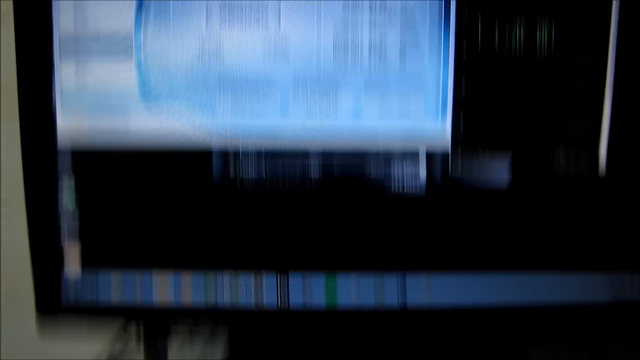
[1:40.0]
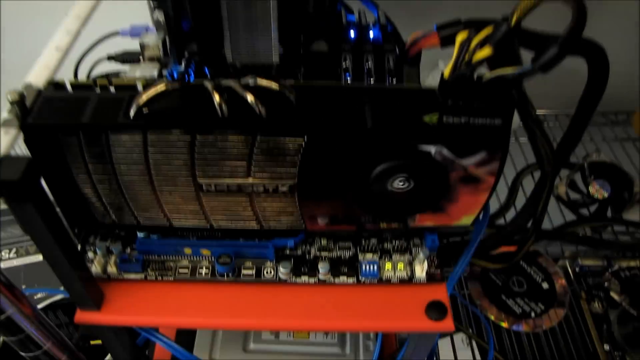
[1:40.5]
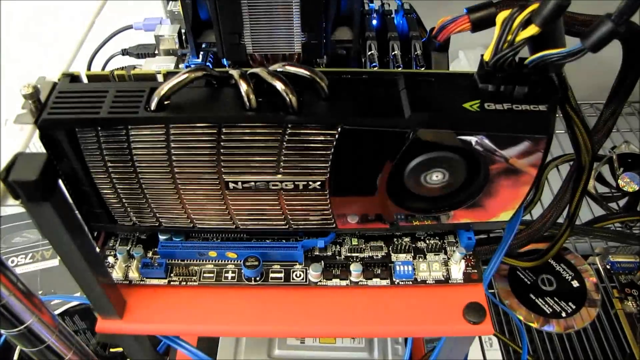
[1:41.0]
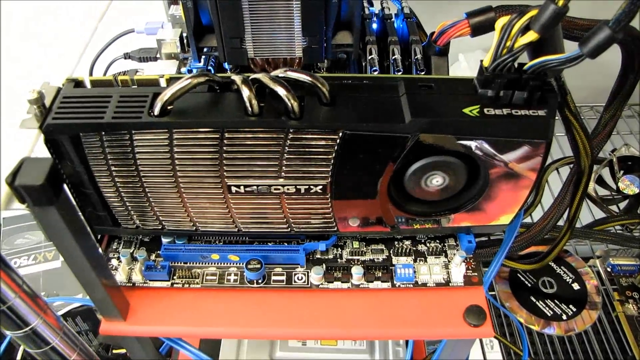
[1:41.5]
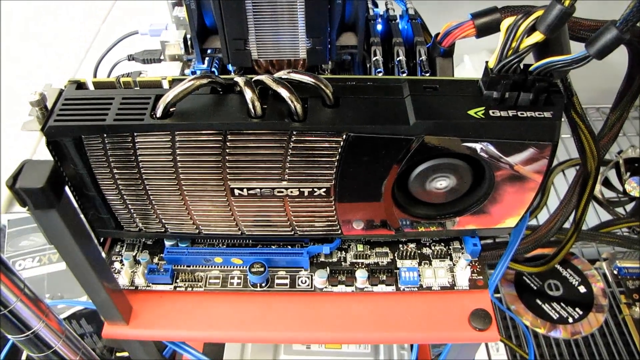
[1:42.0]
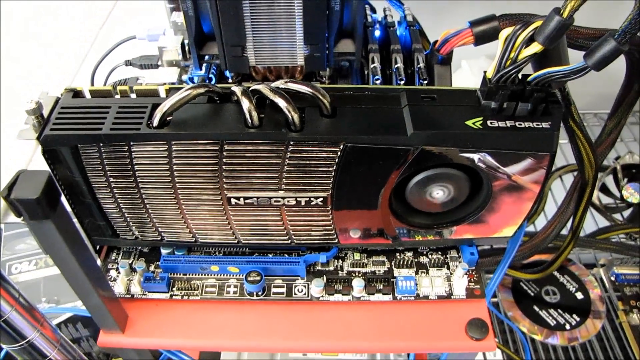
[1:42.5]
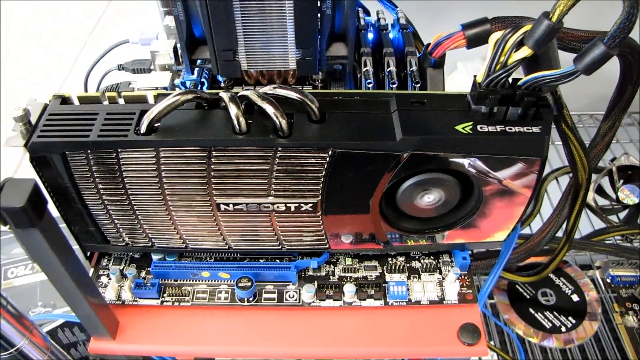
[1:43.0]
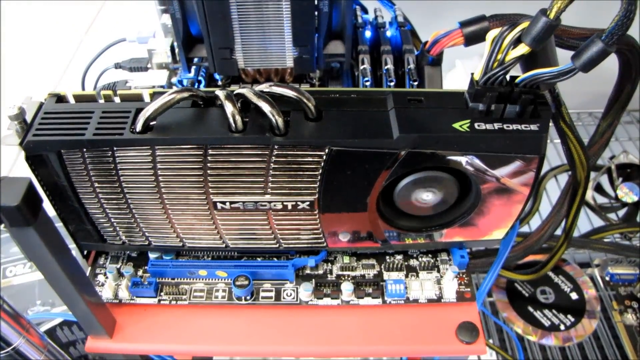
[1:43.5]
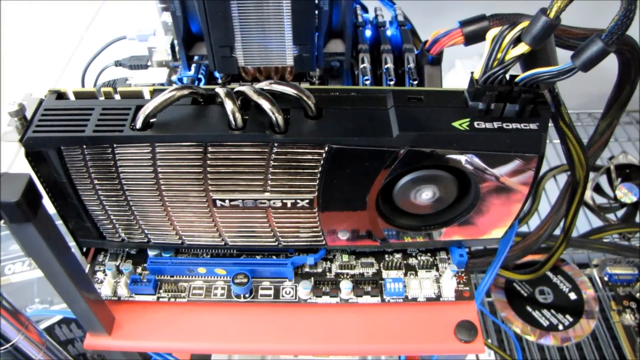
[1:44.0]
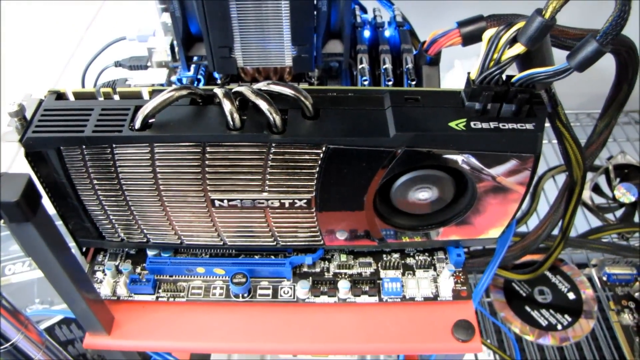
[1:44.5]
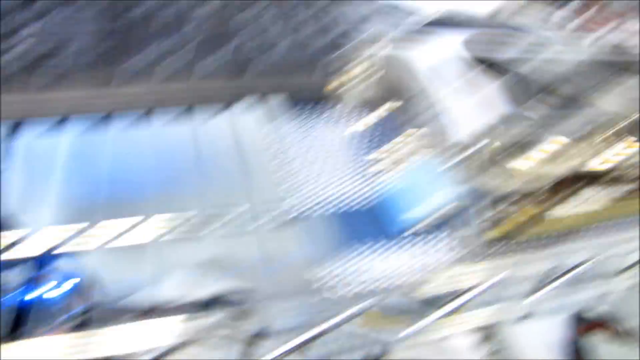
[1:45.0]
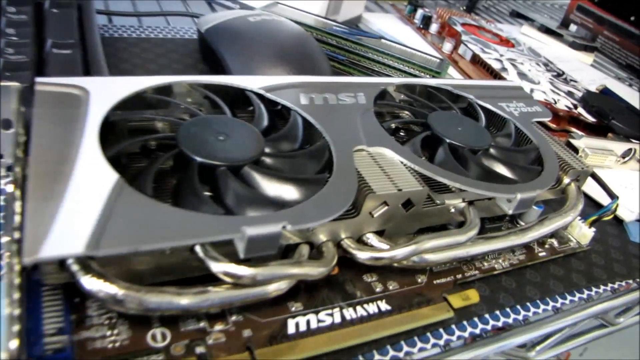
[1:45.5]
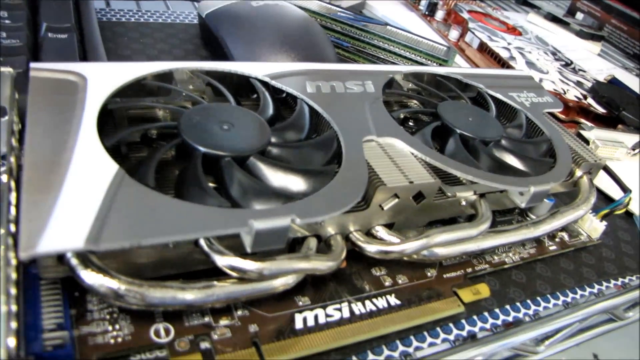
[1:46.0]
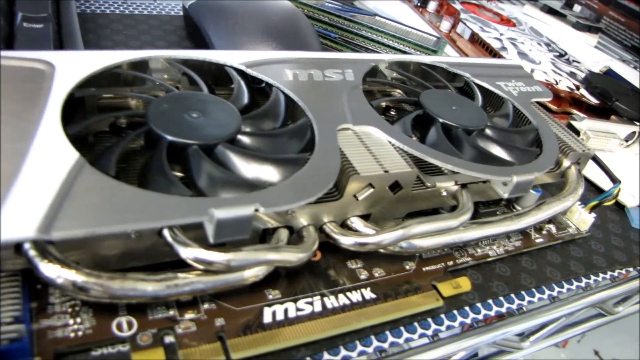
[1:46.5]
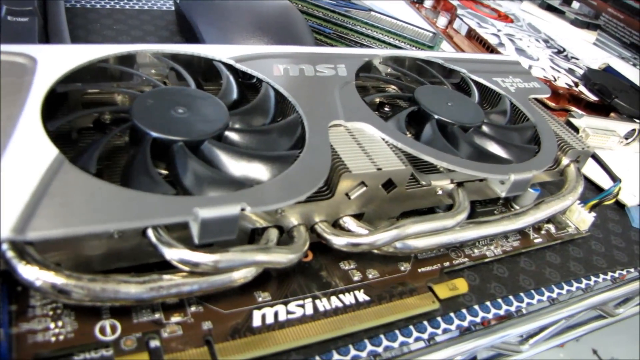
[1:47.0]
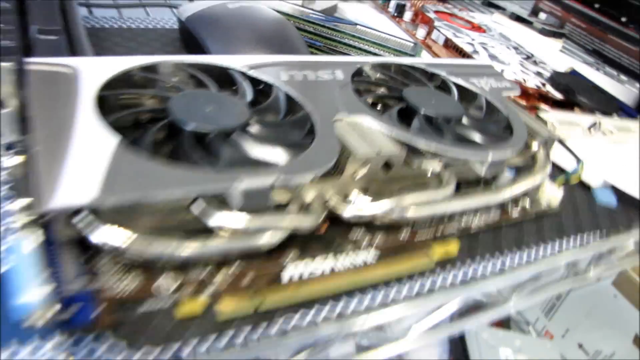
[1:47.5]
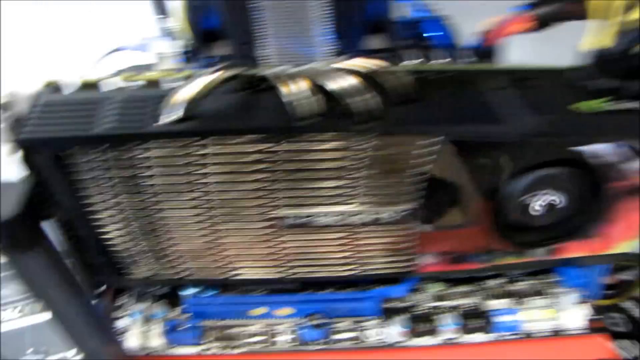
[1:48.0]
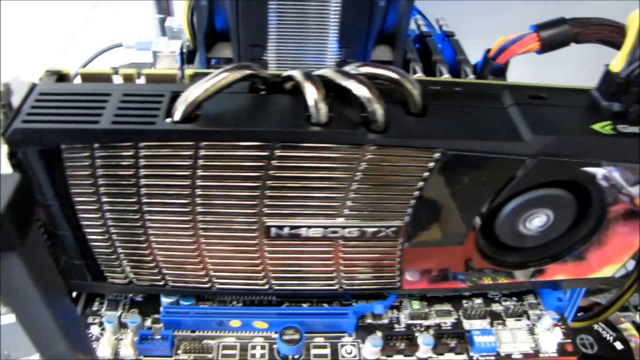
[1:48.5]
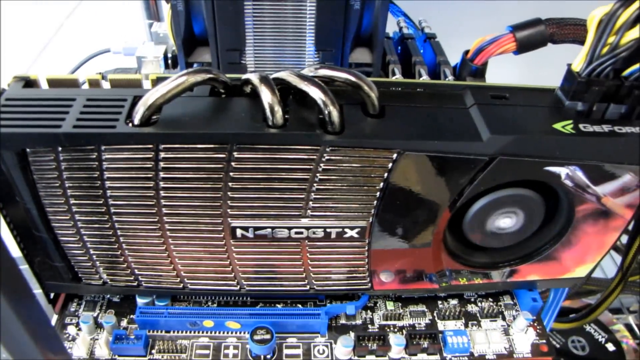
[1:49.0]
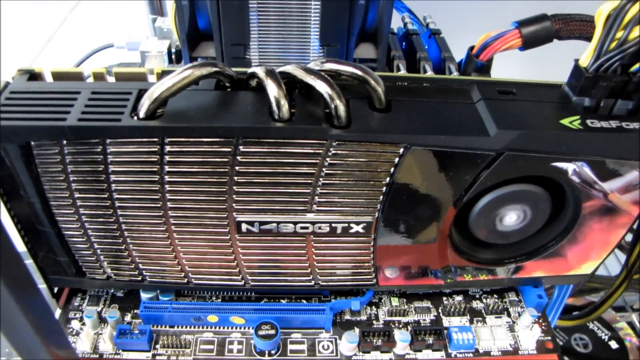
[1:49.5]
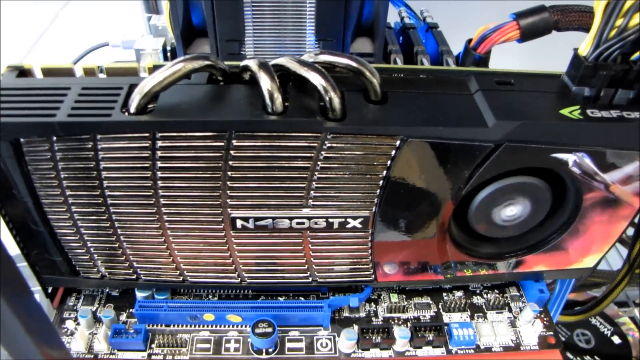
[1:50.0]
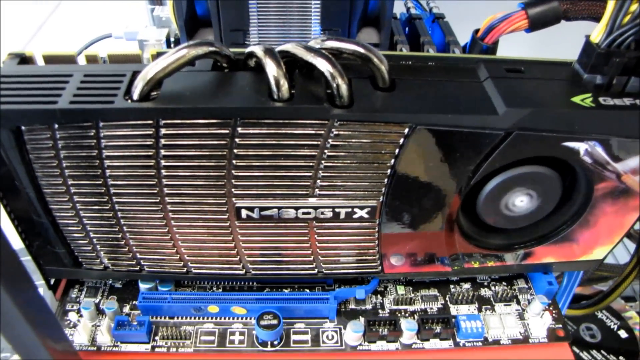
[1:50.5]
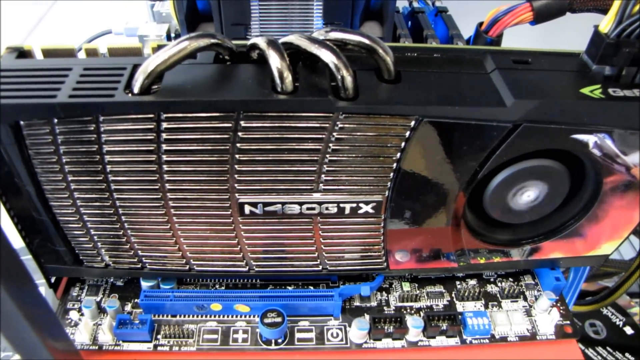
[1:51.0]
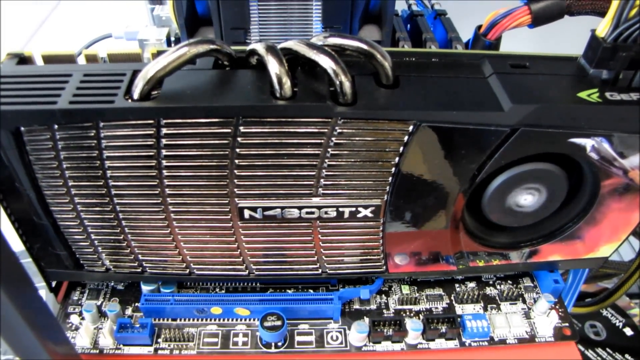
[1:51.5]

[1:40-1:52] Some sort of machine-type part is shown, and a little fan or piece next to it is moving in a circle. It says "GE force" in the right-hand corner, wires come out of its top, and there is a model number on it, "n480 GTX". It is on a metal shelf. The camera pans up one level on the shelf to another component, apparently belonging to this machine, which looks like a fan; the camera briefly shows it and zooms in on it, and it says "MSI Hawk". The camera then zooms back down to the main machine.